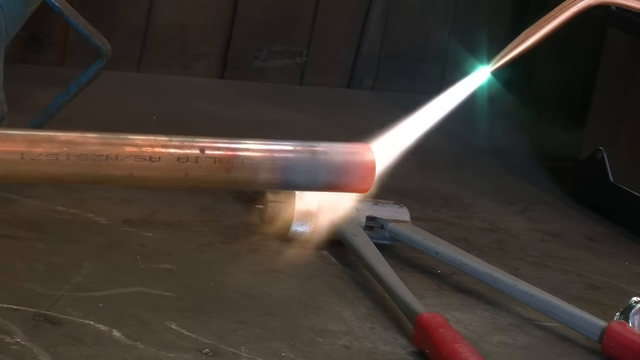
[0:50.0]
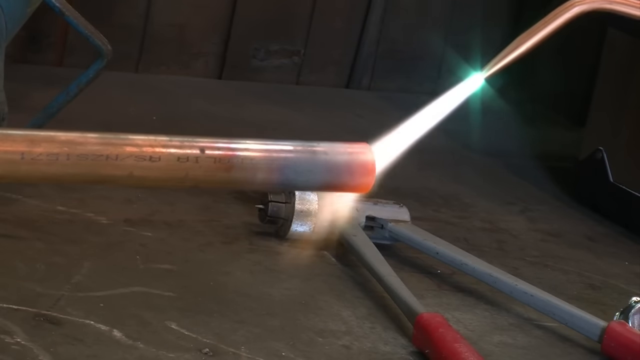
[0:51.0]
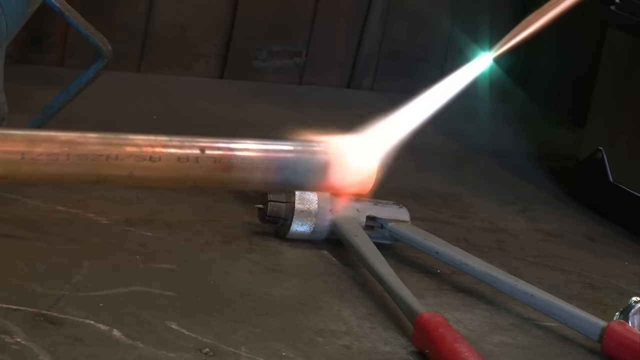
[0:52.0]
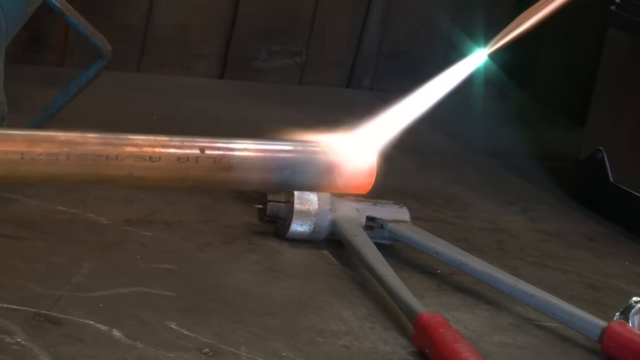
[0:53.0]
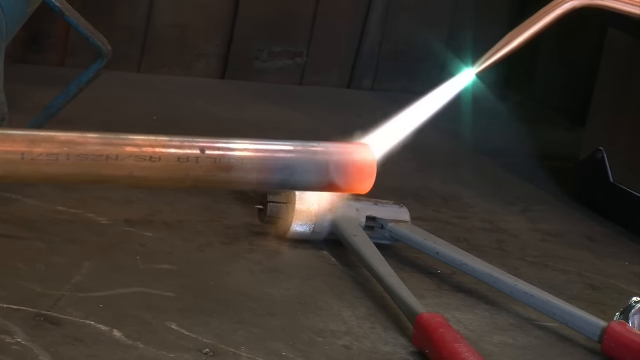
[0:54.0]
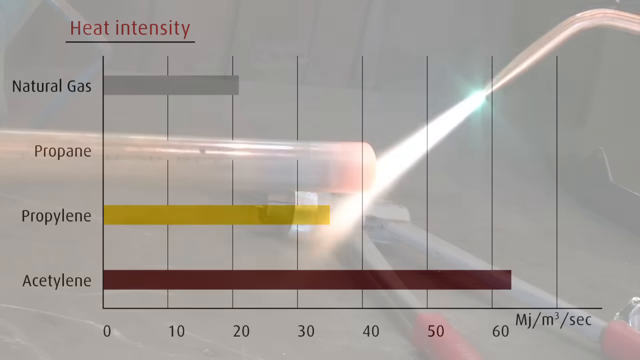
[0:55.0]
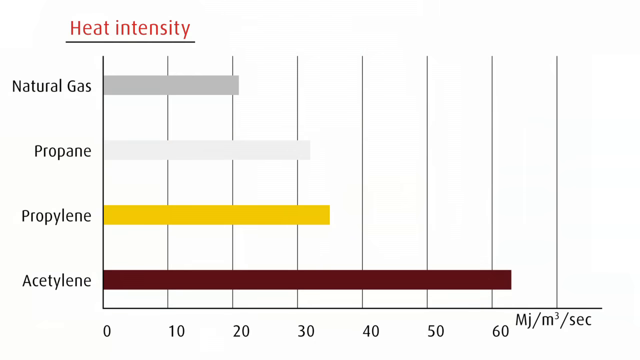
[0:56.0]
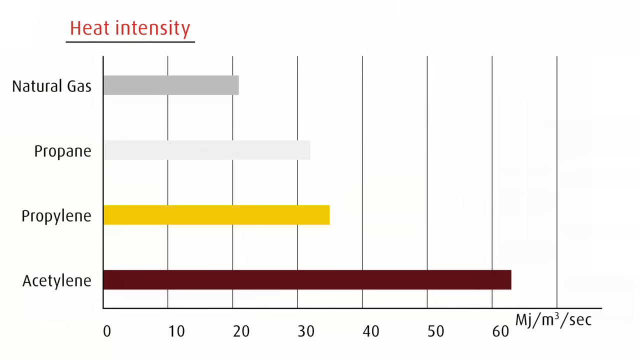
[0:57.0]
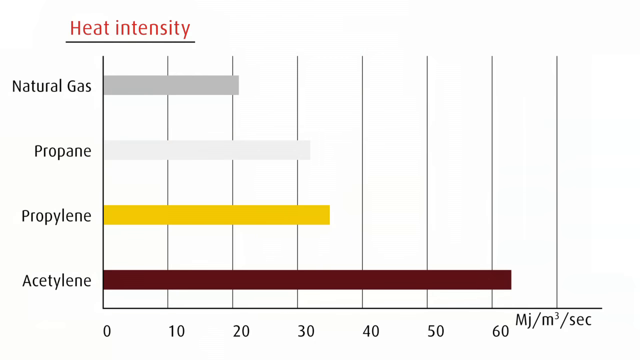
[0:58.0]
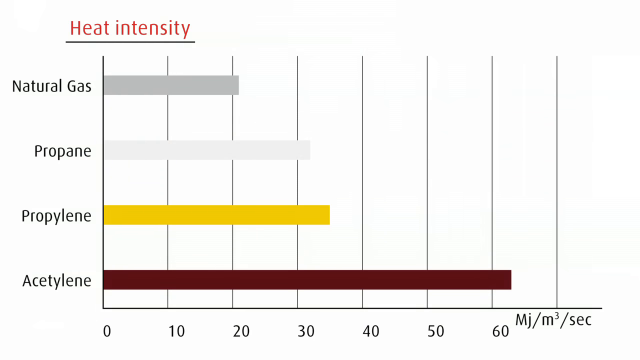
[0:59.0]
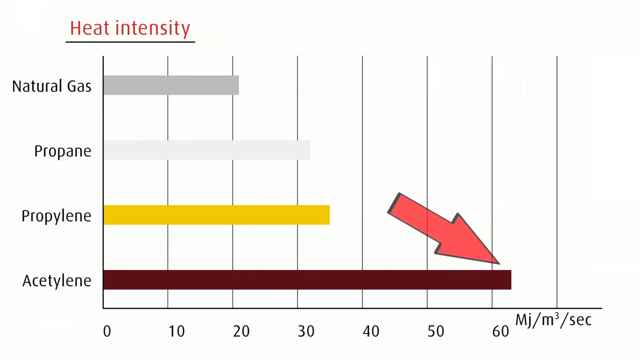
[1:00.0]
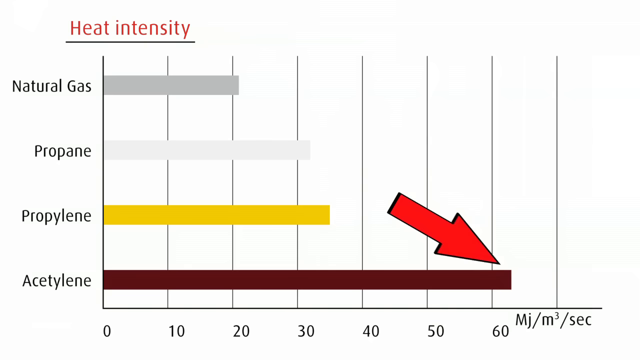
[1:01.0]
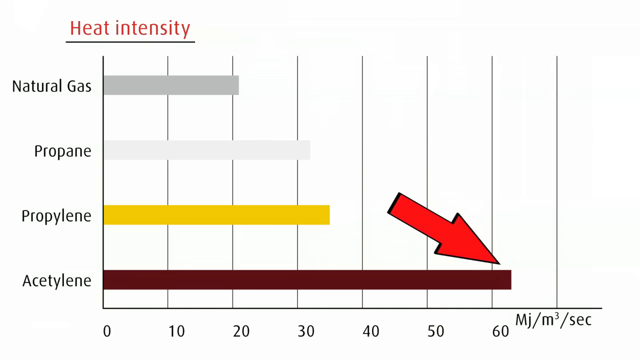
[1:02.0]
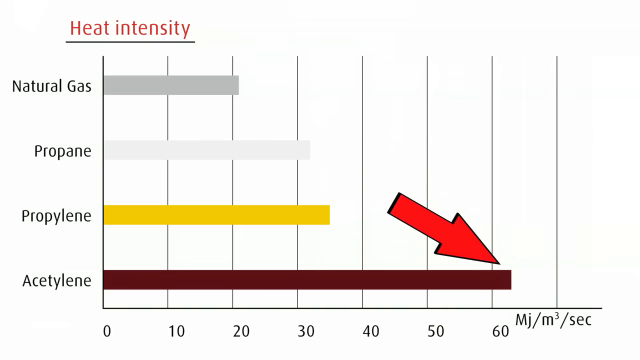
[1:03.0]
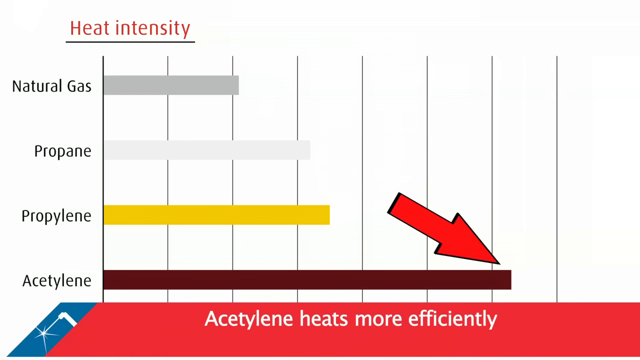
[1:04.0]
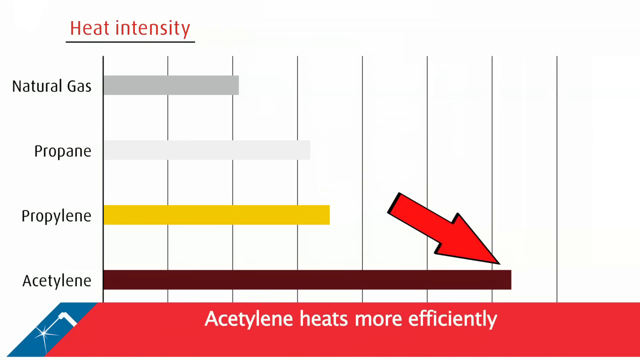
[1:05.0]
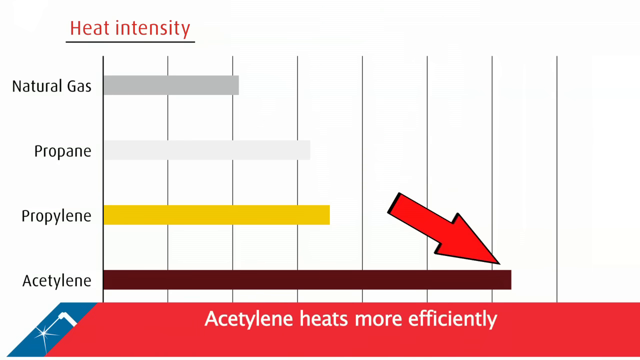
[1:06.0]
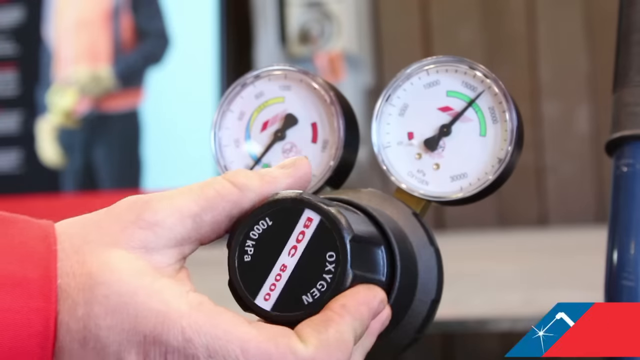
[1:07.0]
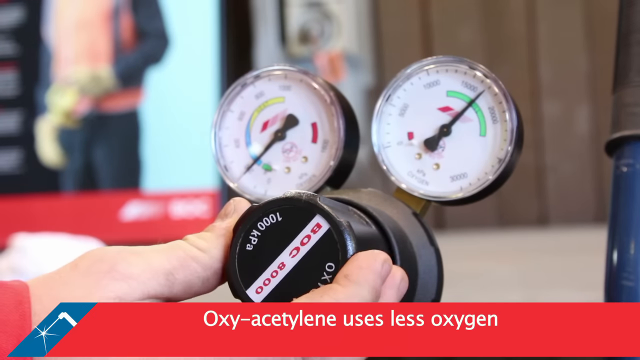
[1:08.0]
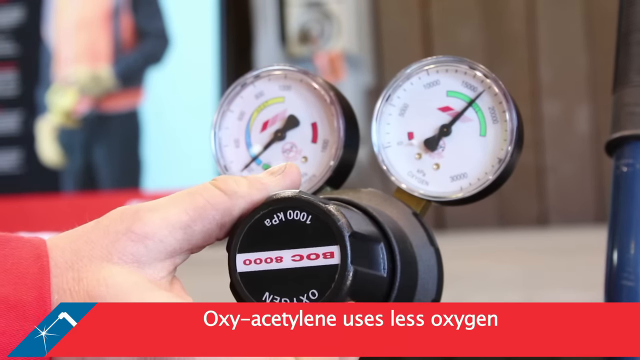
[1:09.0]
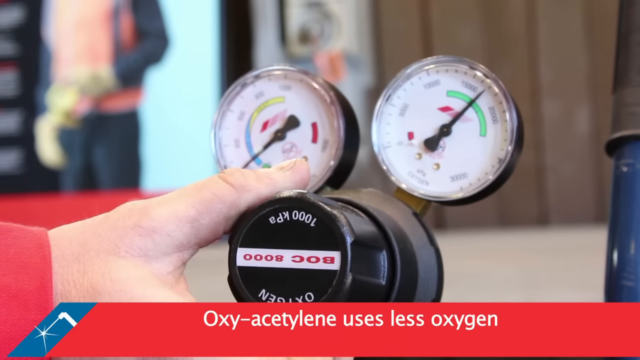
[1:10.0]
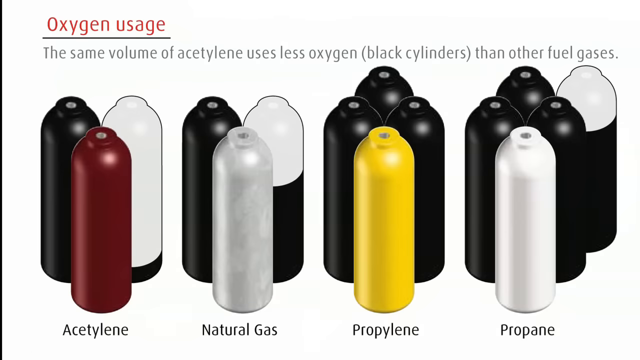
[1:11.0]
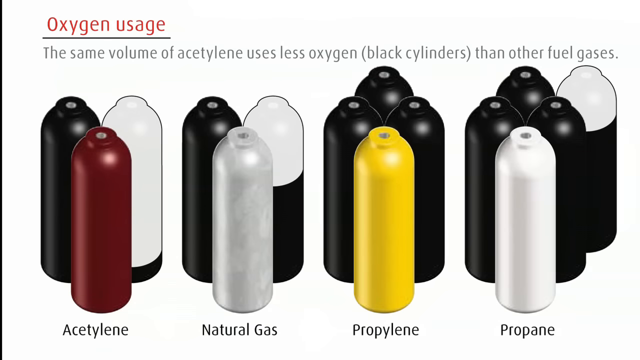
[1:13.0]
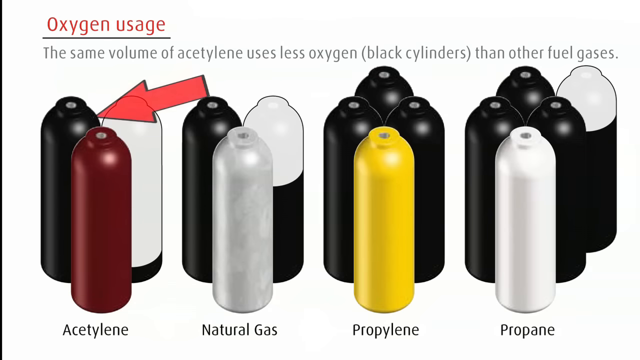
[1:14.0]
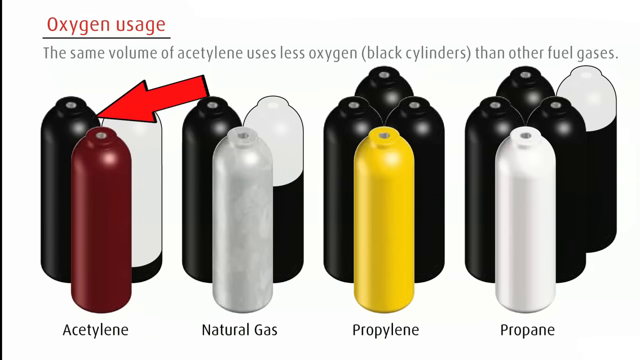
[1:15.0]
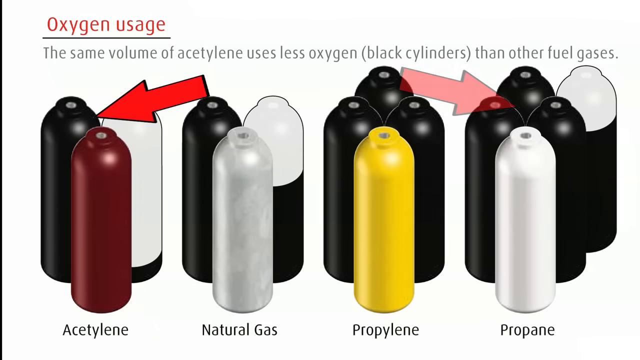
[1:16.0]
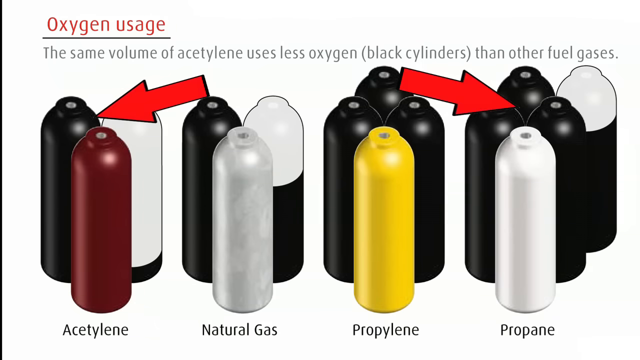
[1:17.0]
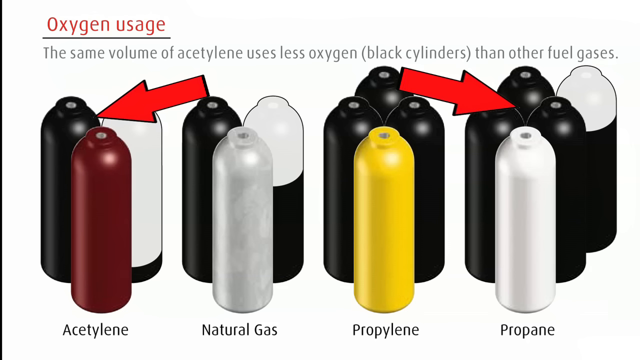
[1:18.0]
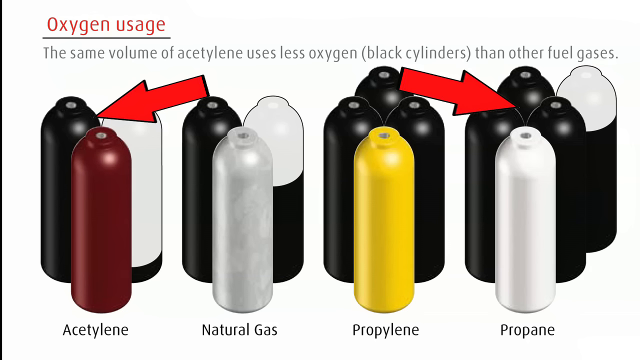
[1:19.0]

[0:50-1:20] A close-up shows the acetylene torch being used on the end of a long copper pipe resting on a table. A heat intensity graph follows. On the left-hand side, from the top, are natural gas with a gray bar, propane with a white bar, propylene with a yellow bar, and finally acetylene with the longest bar, in burgundy. The scale at the bottom runs from zero to 60. A red arrow pops up marking the end of the acetylene bar, and then a red banner appears reading "acetylene heats more efficiently." Next, a person in a red shirt turns a knob while a person in a dark outfit with an orange vest is in the background. Another shot shows different cylinders with the text "oxygen usage" and "the same volume of acetylene uses less oxygen." Two red arrows appear on the groups on the right and on the left.